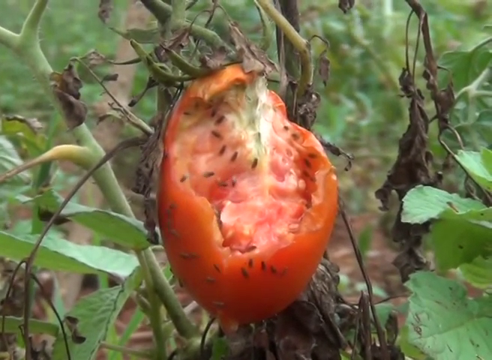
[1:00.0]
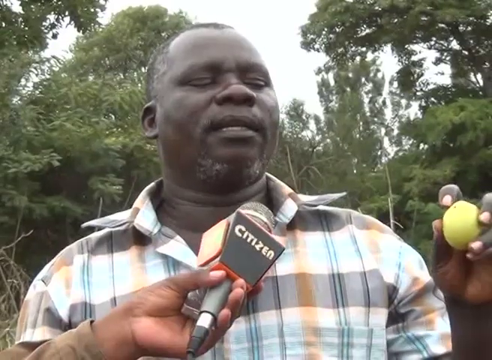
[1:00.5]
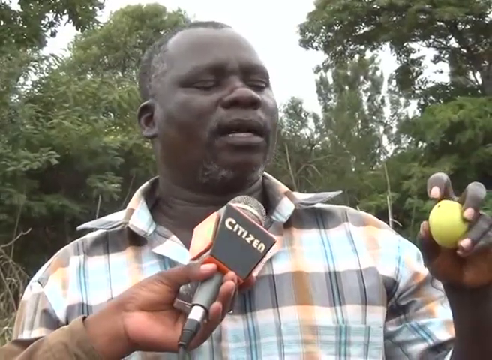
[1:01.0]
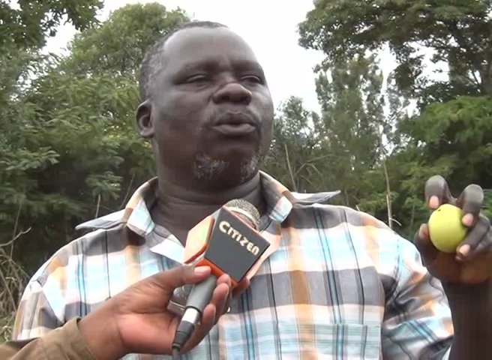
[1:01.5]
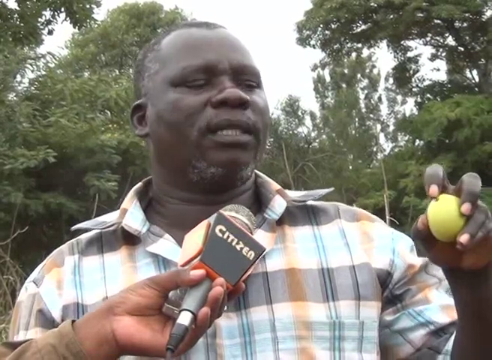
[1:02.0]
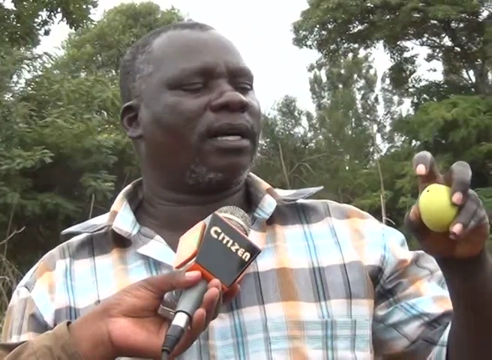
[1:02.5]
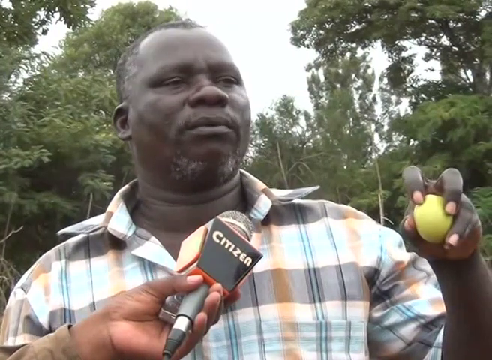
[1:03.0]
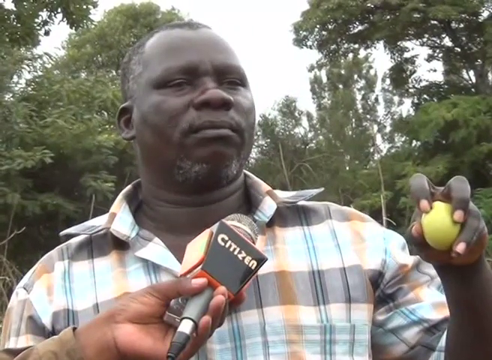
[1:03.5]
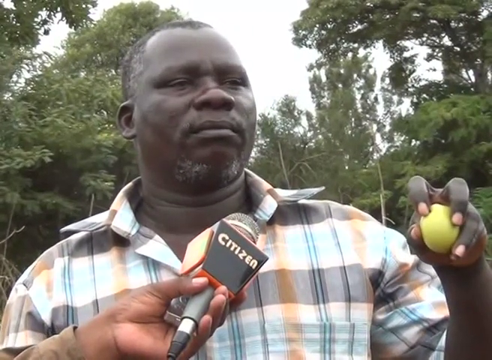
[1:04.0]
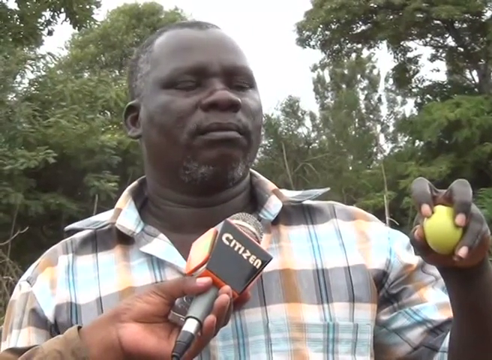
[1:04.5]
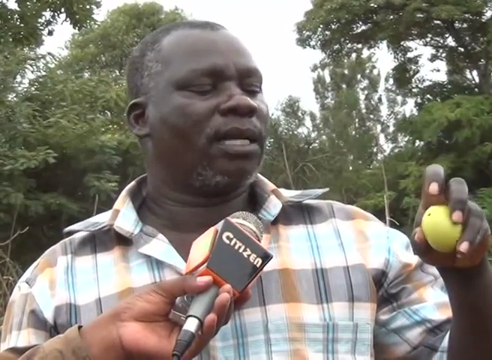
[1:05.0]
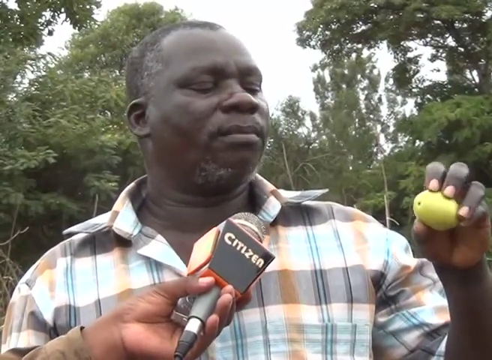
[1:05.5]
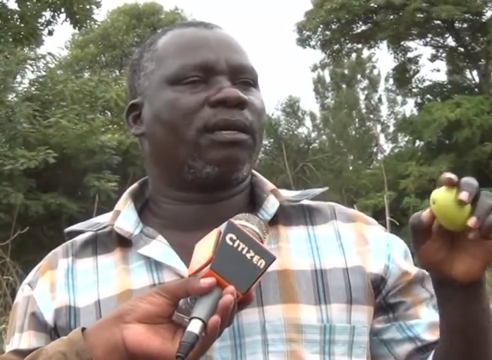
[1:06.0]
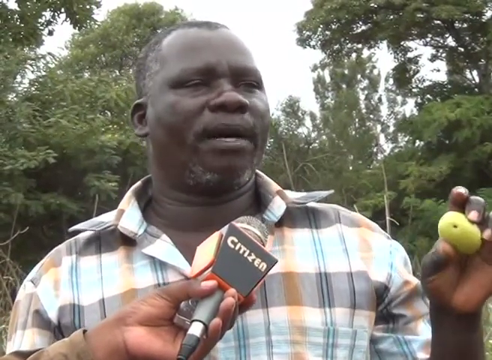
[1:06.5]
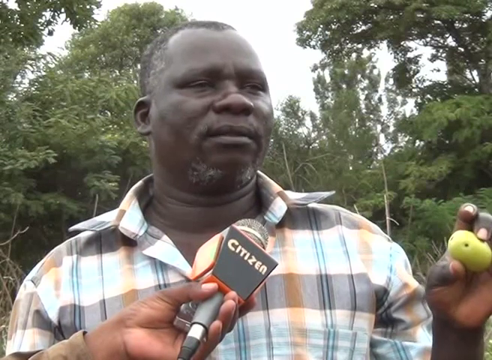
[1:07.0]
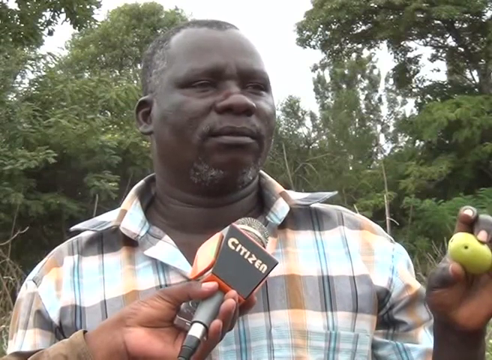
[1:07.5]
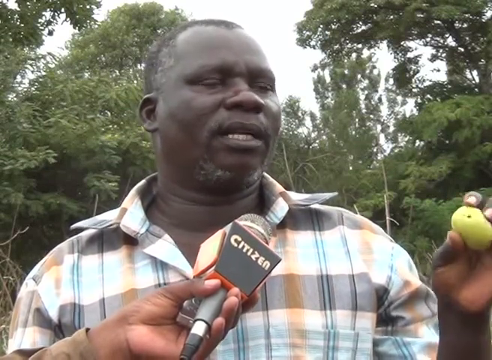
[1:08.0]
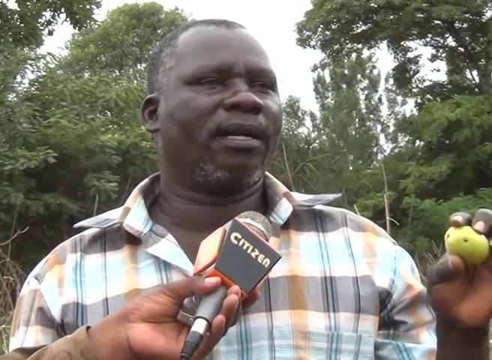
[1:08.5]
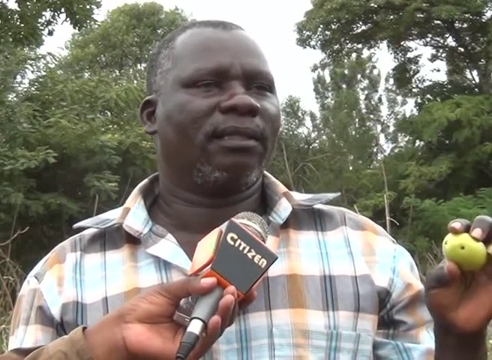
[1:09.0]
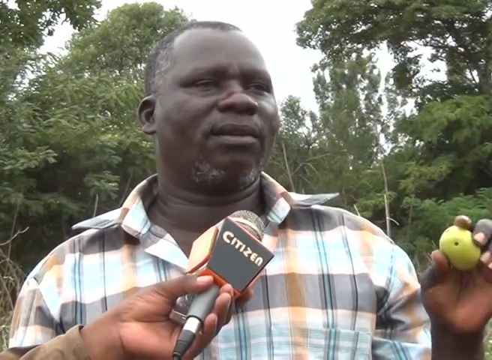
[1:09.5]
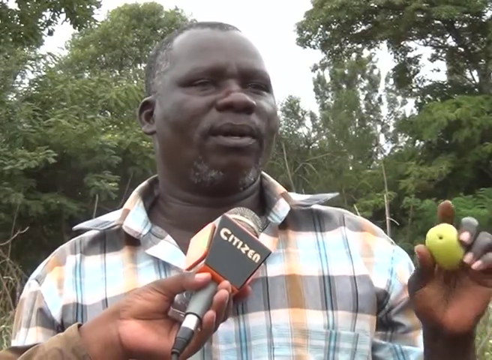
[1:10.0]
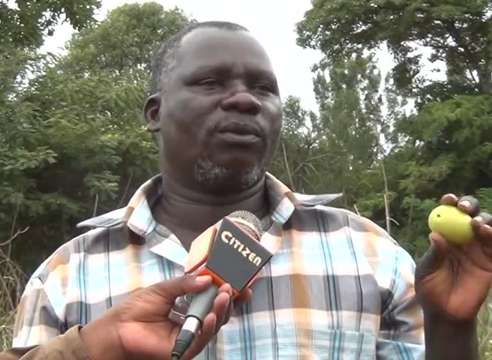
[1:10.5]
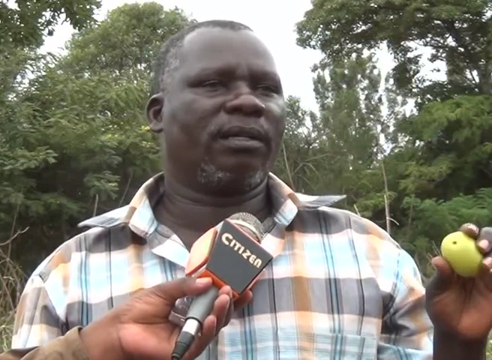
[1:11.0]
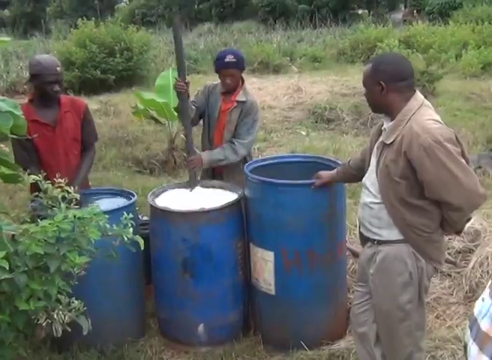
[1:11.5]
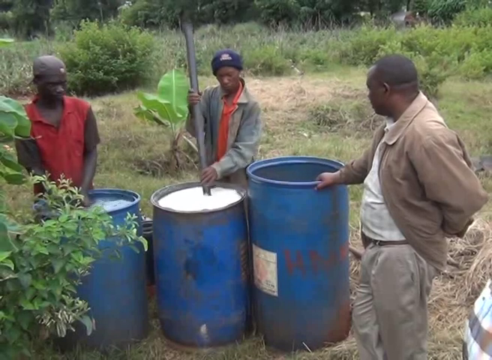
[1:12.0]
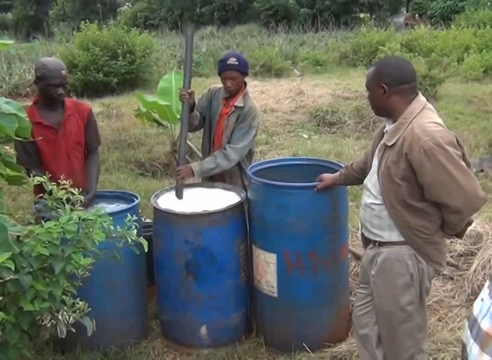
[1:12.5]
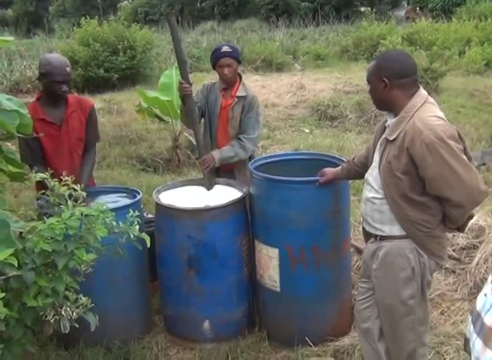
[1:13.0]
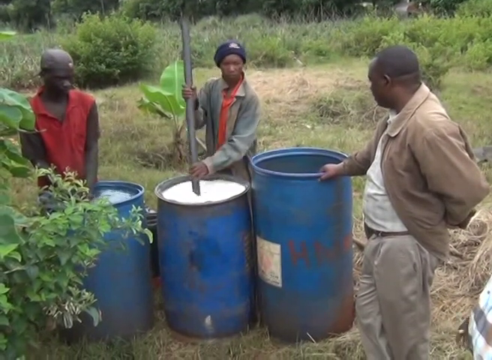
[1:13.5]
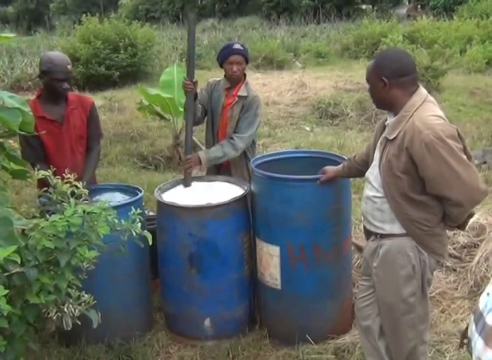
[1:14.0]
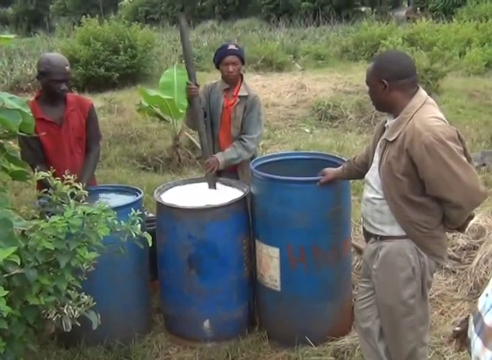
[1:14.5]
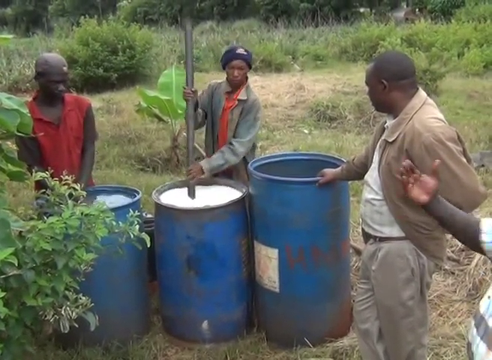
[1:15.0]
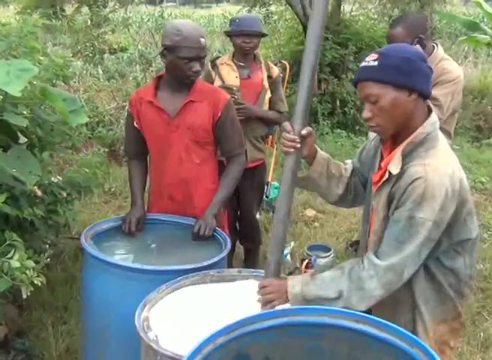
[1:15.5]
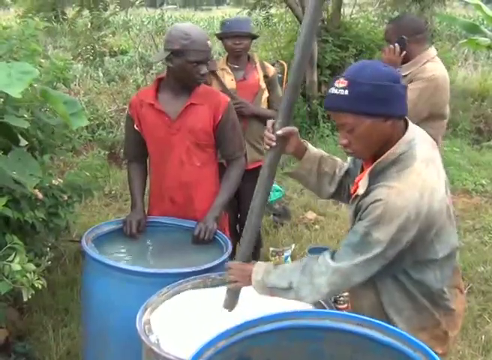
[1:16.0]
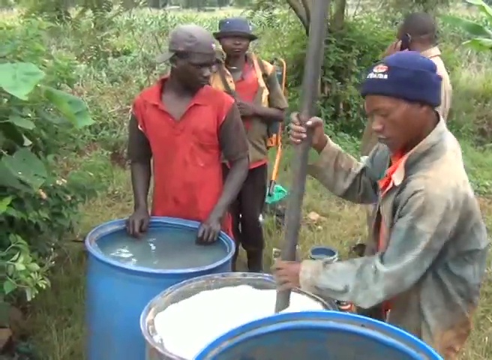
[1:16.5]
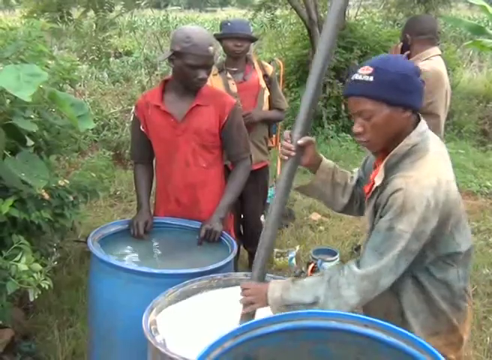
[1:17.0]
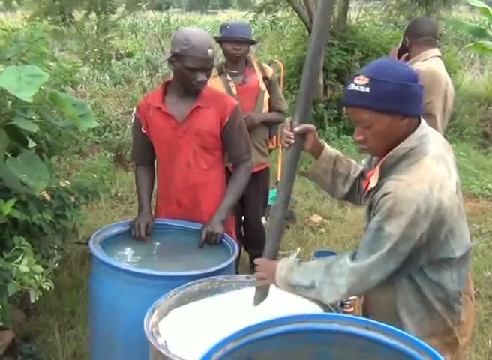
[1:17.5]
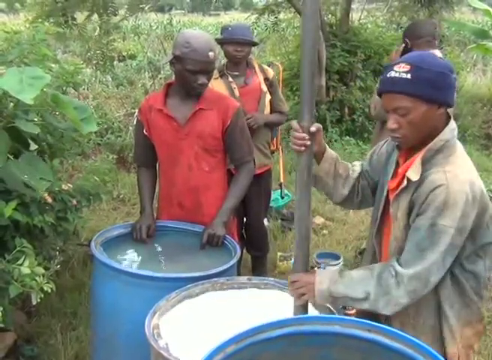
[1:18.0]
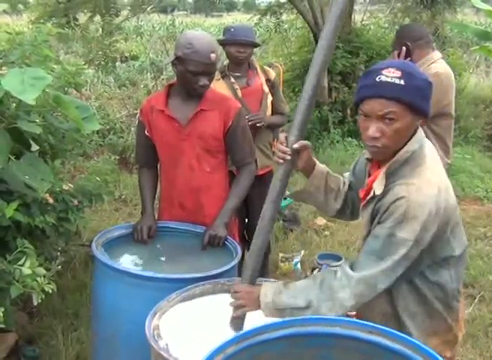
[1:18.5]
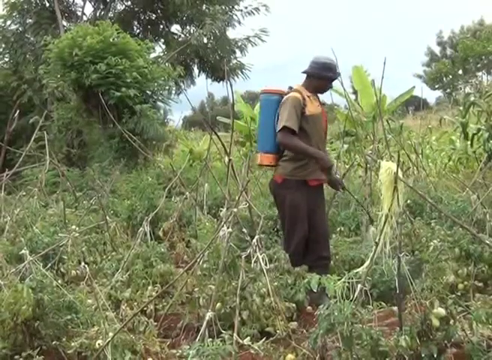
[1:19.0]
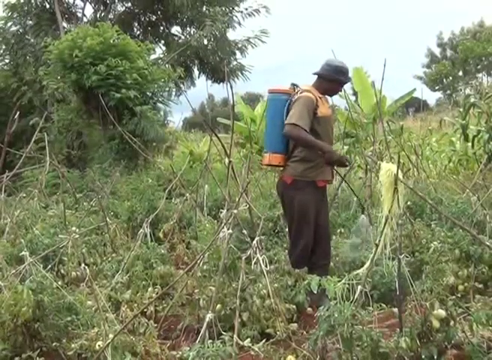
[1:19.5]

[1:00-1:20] A plant has a rotting tomato on it with some of its skin peeled off and many fruit flies on it. The video cuts to a man in a plaid shirt being interviewed, holding a green tomato in his left hand. In front of him is the hand of a reporter holding a microphone, and the man talks while looking at the tomato in his left hand. Next, three men stand in front of blue barrels; one holds a stick and seems to be mixing liquid inside one of the barrels. The video then cuts to a man who seems to be spraying the tomato plants with a hose. He also seems to have a blue and orange container strapped to his back, and he wears a hat, a brown shirt and brown pants.